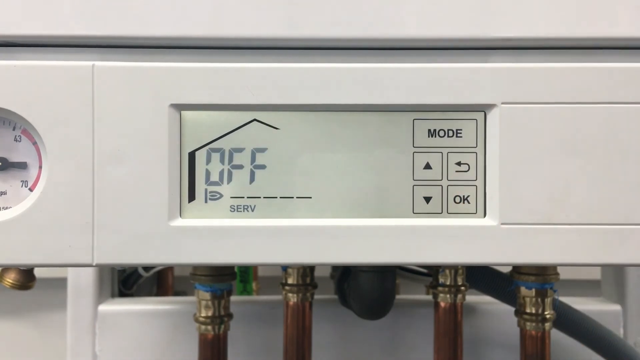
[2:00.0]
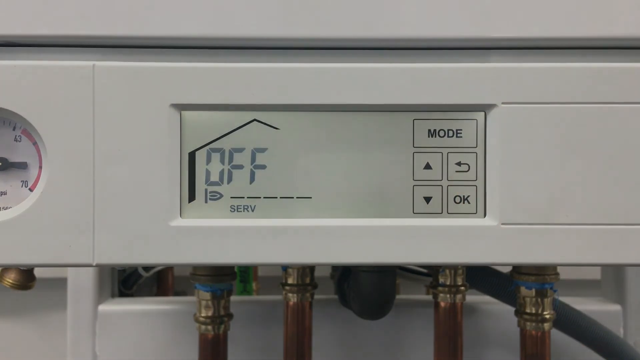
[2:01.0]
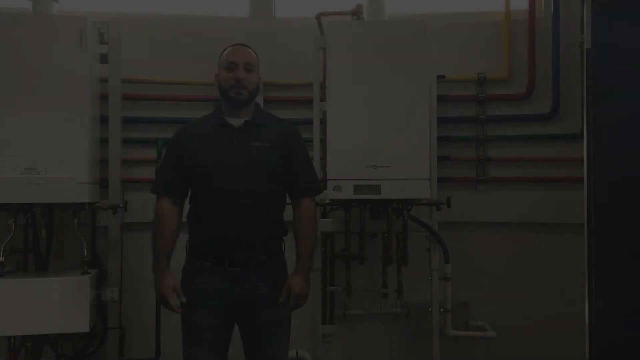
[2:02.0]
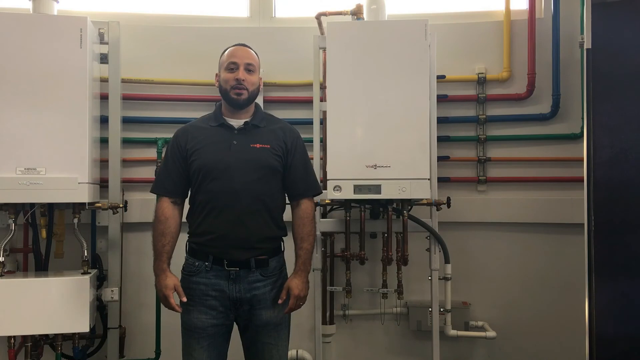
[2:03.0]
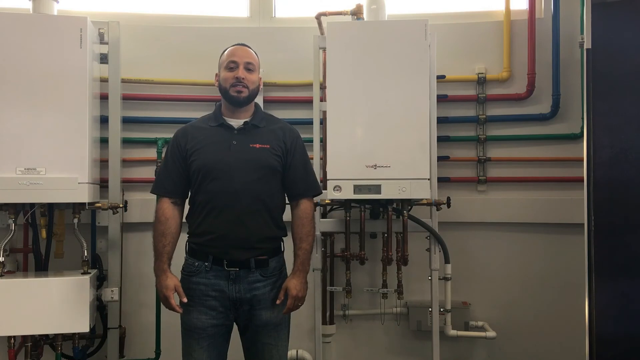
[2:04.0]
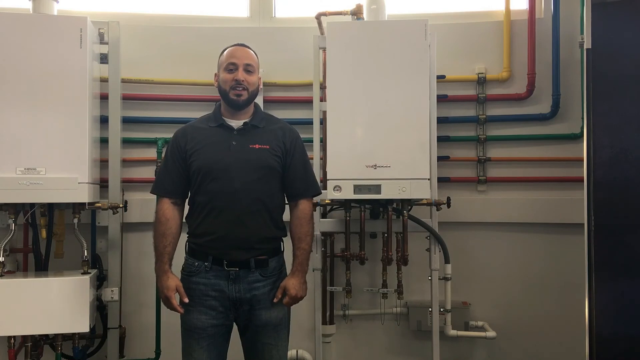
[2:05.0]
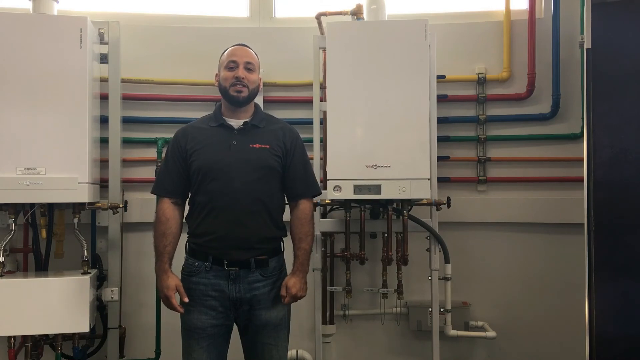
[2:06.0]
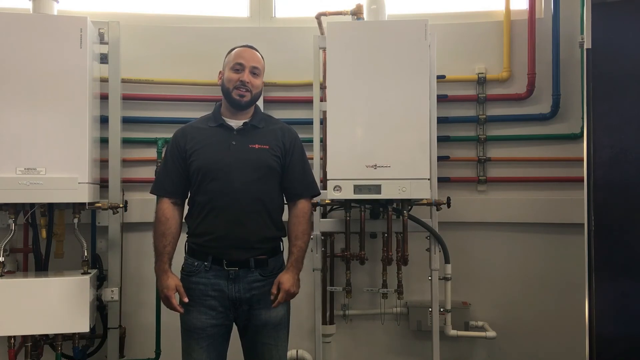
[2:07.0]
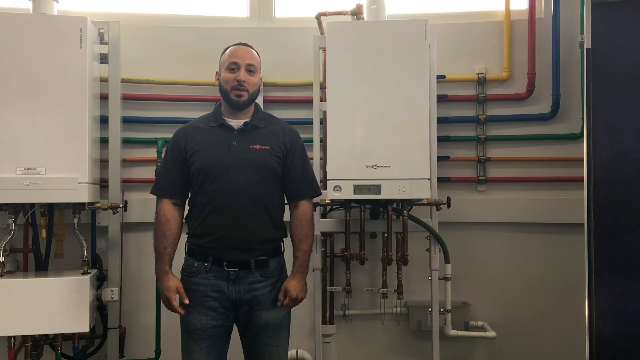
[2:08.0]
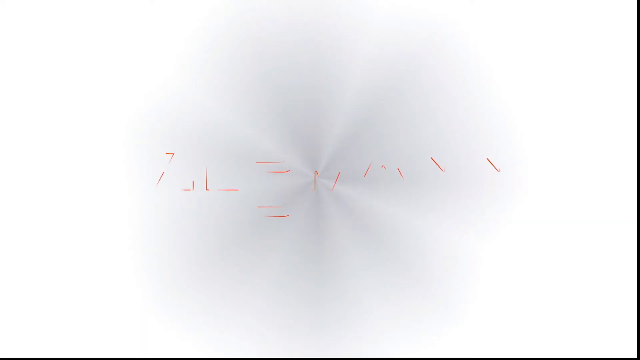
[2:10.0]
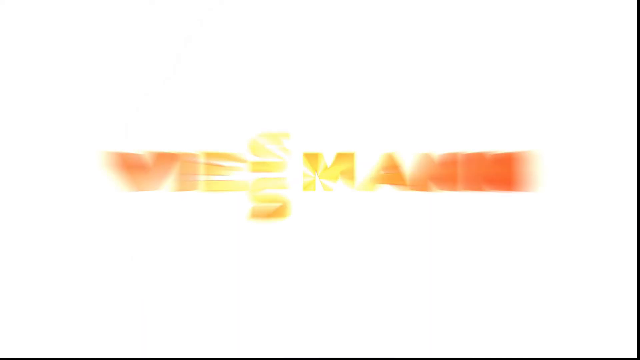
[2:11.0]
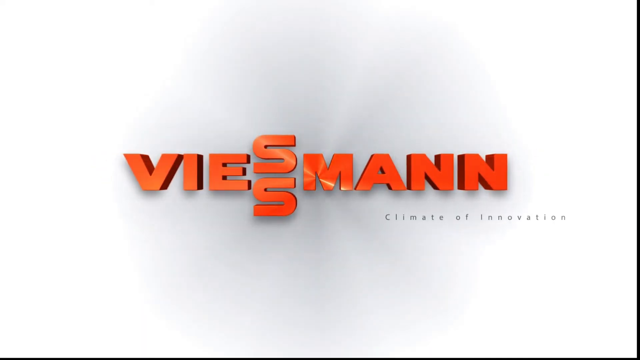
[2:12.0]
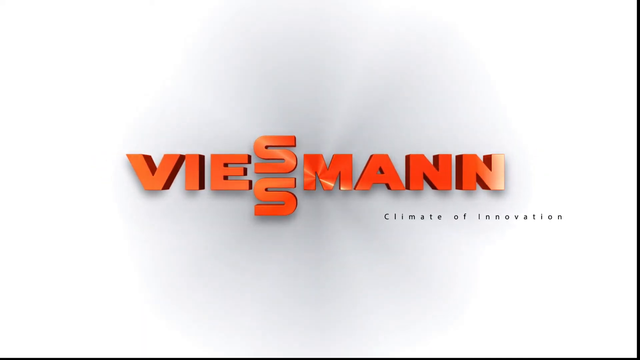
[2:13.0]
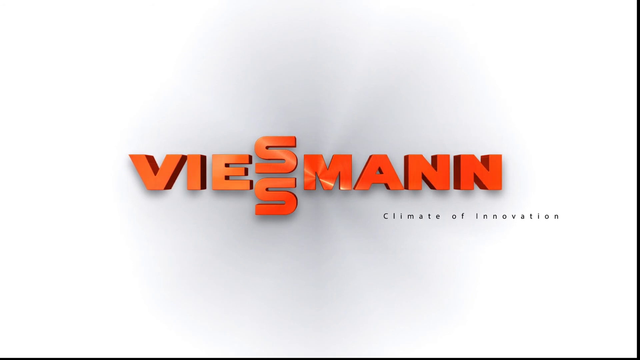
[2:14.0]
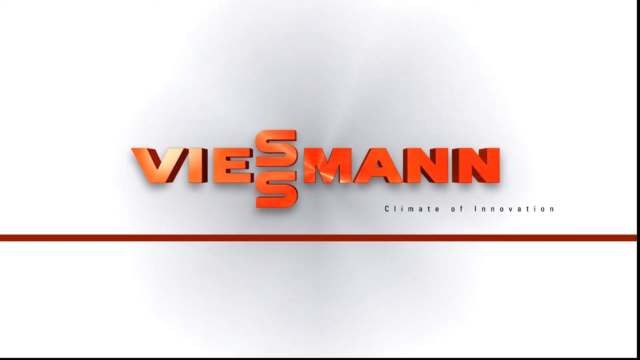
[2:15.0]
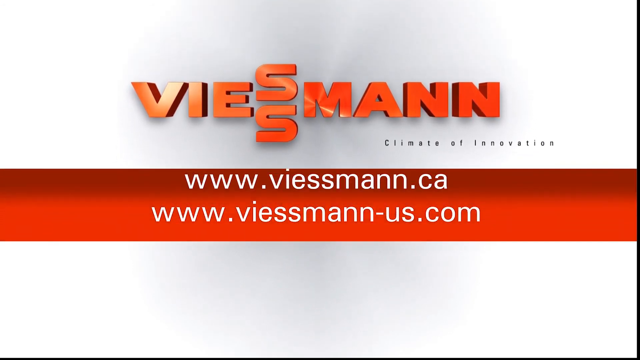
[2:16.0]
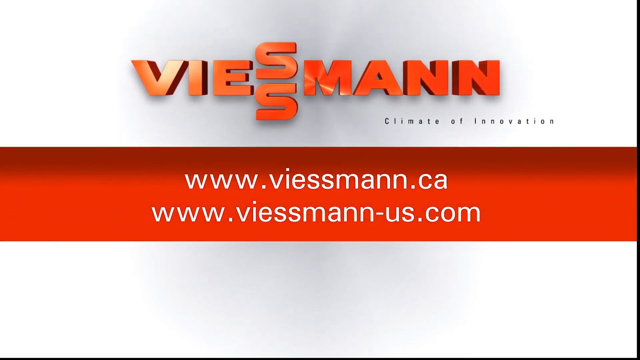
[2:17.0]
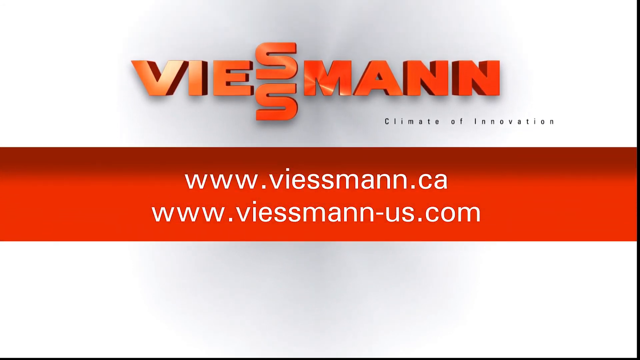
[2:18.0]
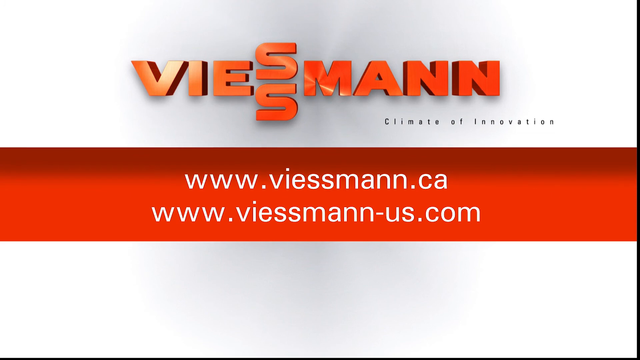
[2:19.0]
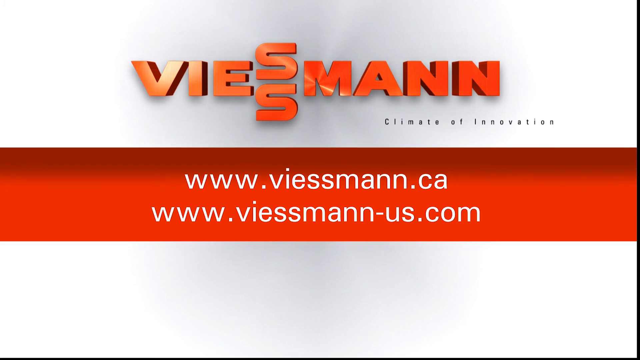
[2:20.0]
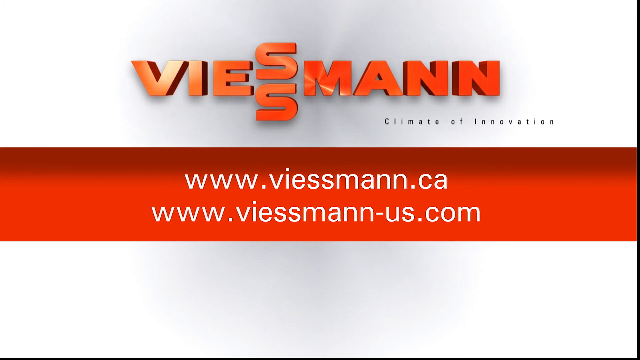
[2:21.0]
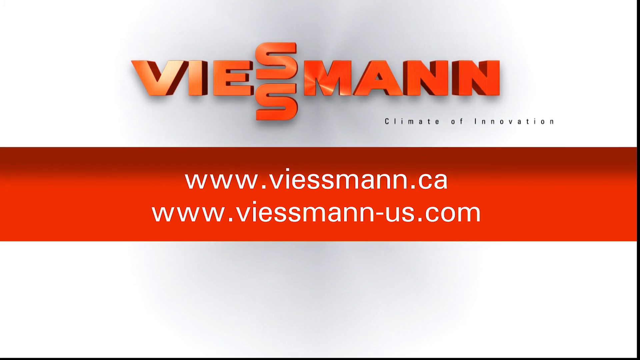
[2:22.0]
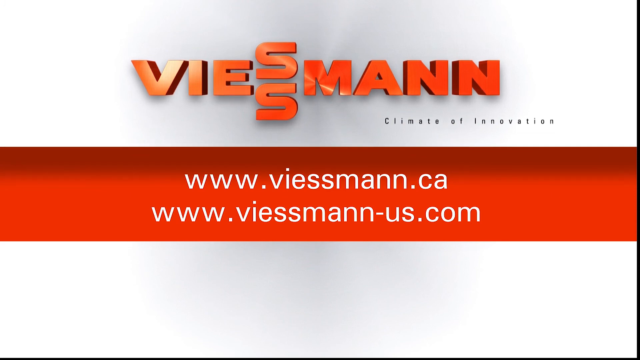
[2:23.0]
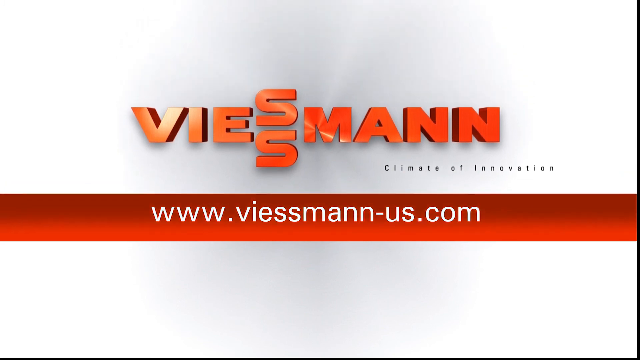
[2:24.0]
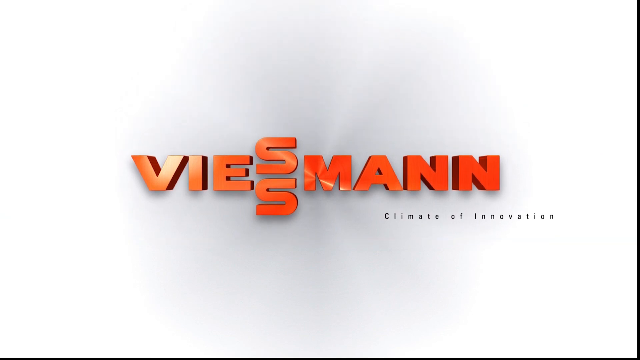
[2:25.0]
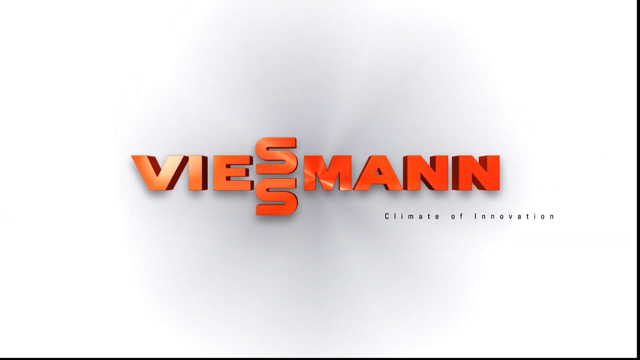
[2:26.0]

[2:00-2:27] The display shows the mode button, up arrow, down arrow, OK and return, along with the word "off," a flame, the word "self," "inside" and a drawing of a house. The man then returns and talks. He wears a round hat, a black short-sleeved shirt with buttons and a brand name on the left side, jeans and a black belt. He has a beard, short brown hair and brown eyes, and stands with his arms straight down and his hands below his belt, talking and smiling. The image of the man disappears, and orange text on a white background reappears reading "Climate of innovation," with the web addresses "www.weissman.ca" and "www.weissman-us.com."